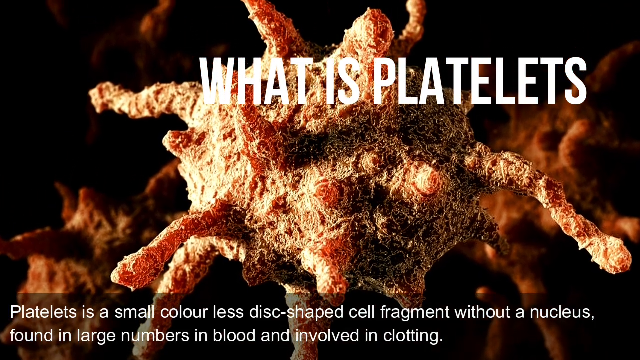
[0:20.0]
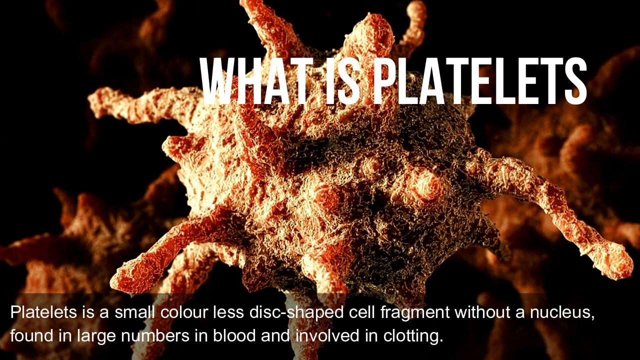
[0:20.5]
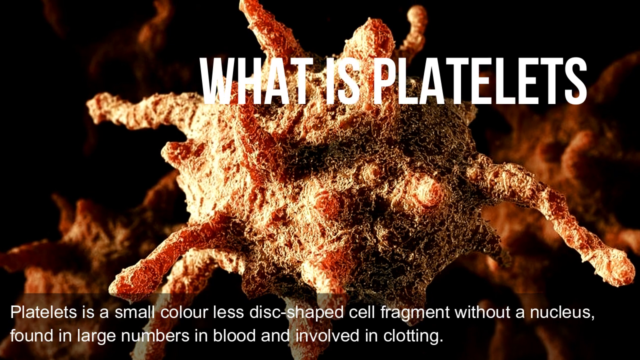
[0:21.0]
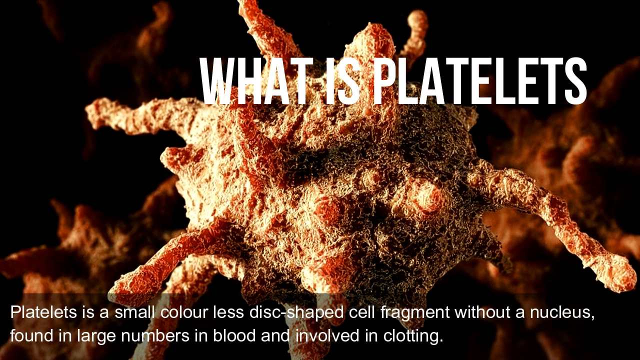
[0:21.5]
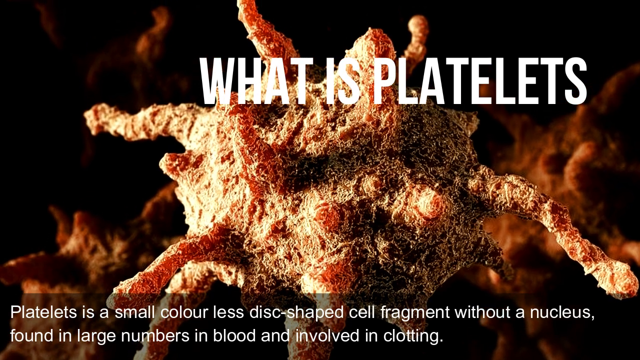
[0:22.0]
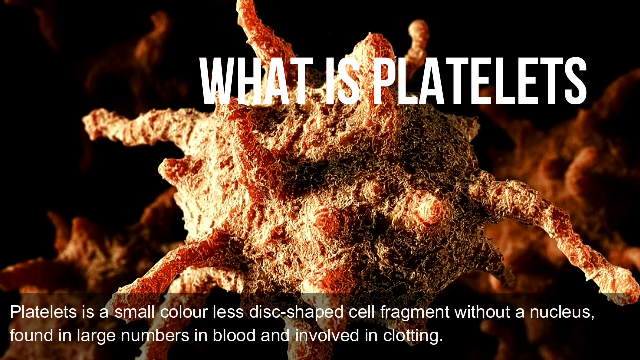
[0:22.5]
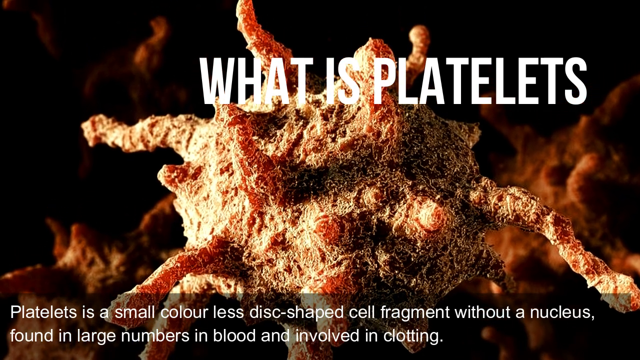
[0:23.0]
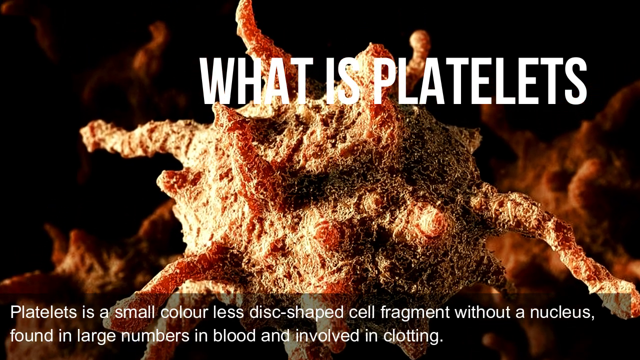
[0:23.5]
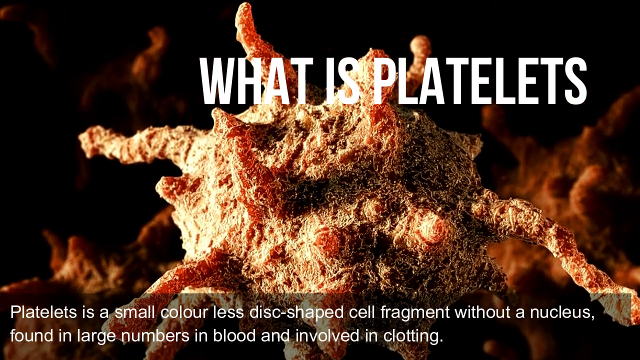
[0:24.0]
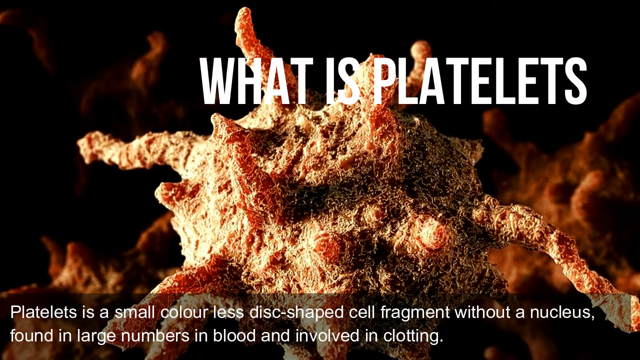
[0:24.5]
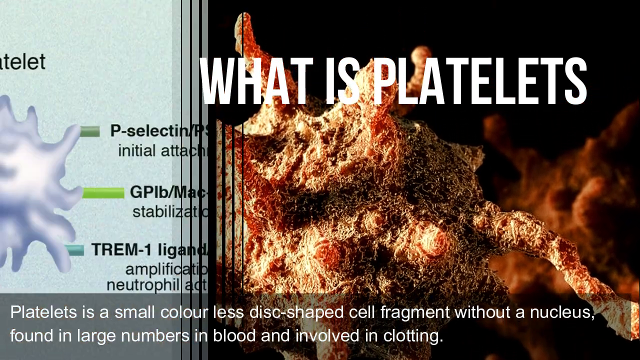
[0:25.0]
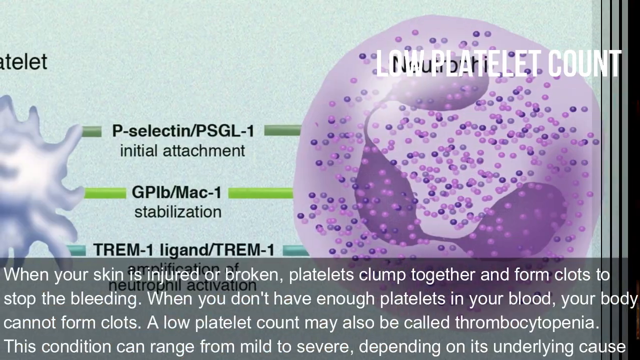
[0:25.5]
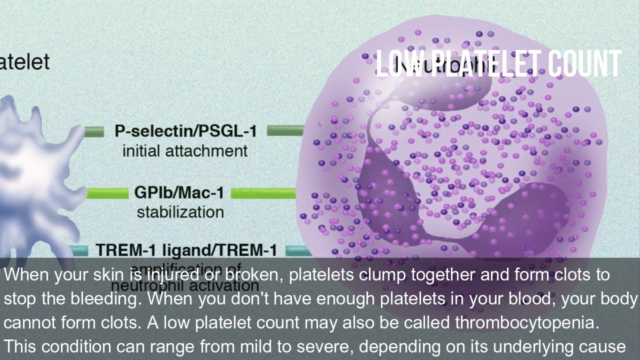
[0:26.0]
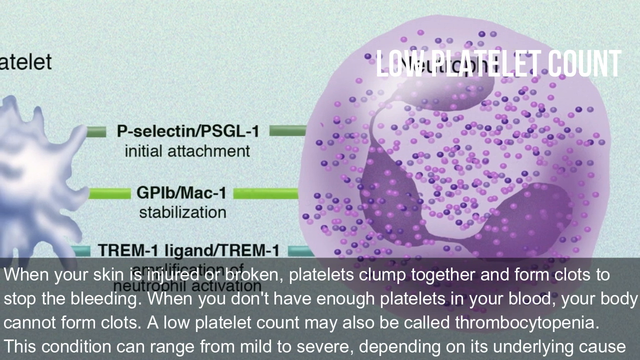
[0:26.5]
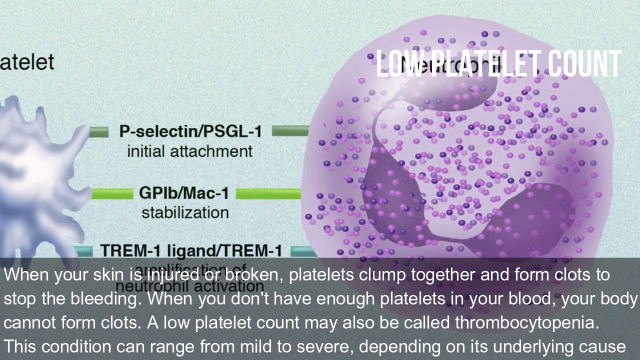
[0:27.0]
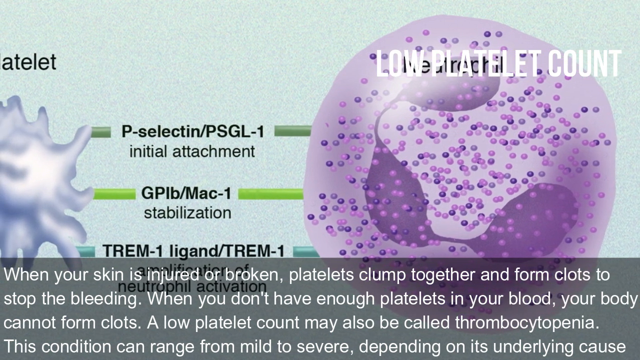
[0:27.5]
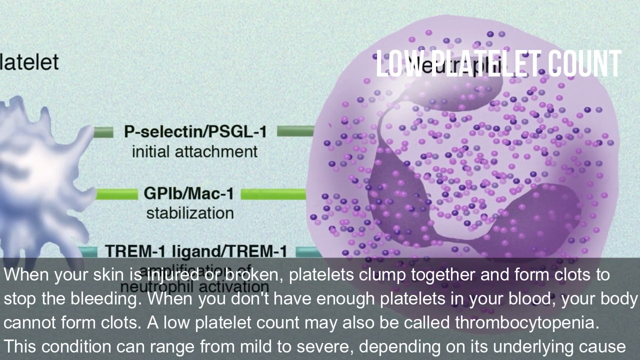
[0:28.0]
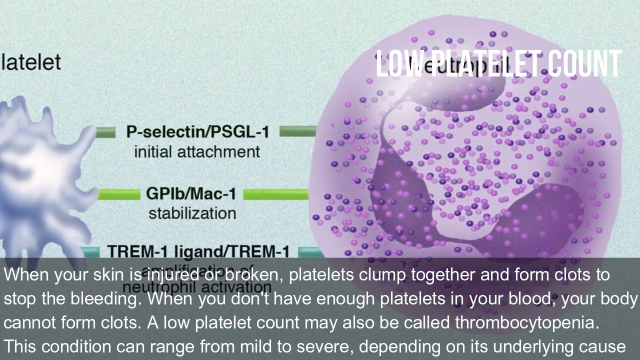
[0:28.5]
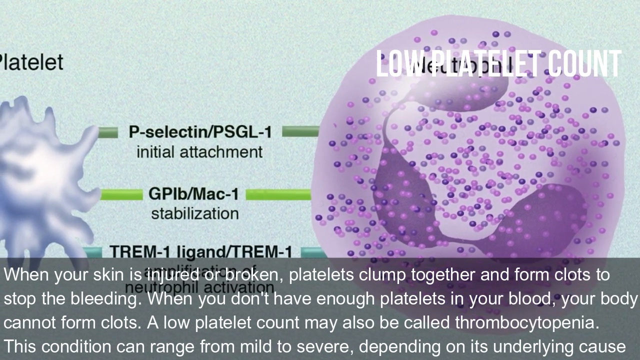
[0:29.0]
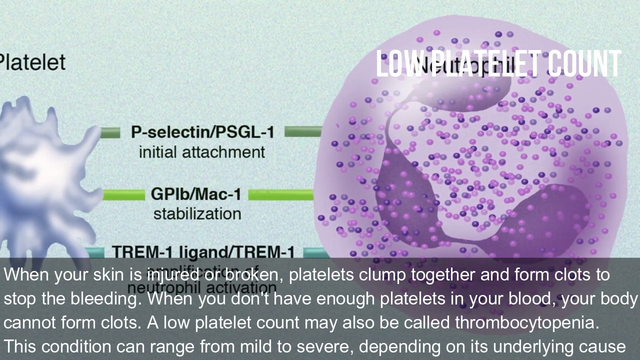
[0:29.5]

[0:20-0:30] The words "what is platelets?" appear with the text "Platelets is a small colorless disc-shaped cell fragment without a nucleus found in large numbers in blood and involved in clotting." A microscopic illustration of a platelet is shown against a black background. The page transitions, and the words at the bottom of the screen read: "when your skin is injured or broken, platelets clump together and form clots to stop the bleeding. When you don't have enough platelets in your blood, your body cannot form clots. A low platelet count may also be called thrombocytopenia. This condition can range from mild to severe, depending on its underlying cause."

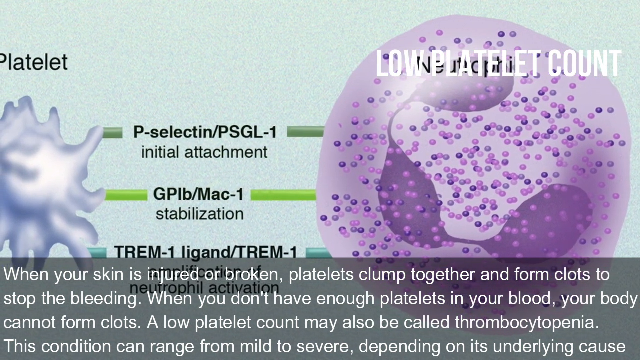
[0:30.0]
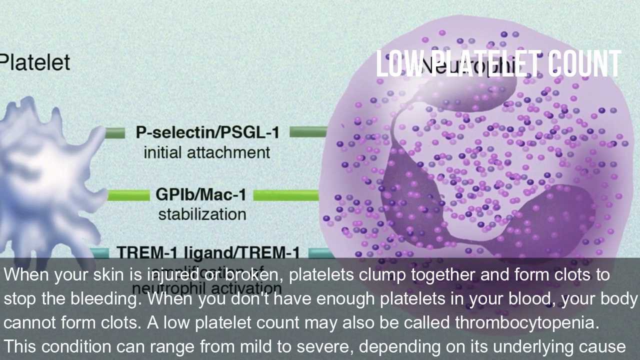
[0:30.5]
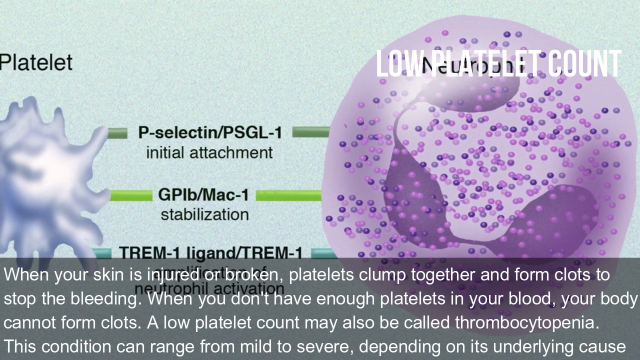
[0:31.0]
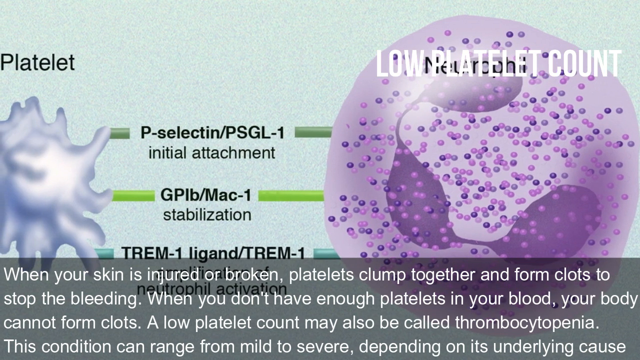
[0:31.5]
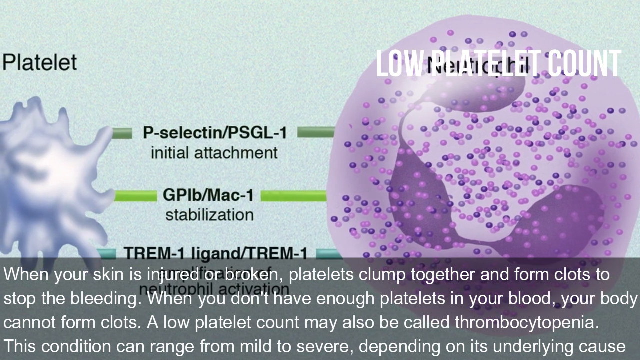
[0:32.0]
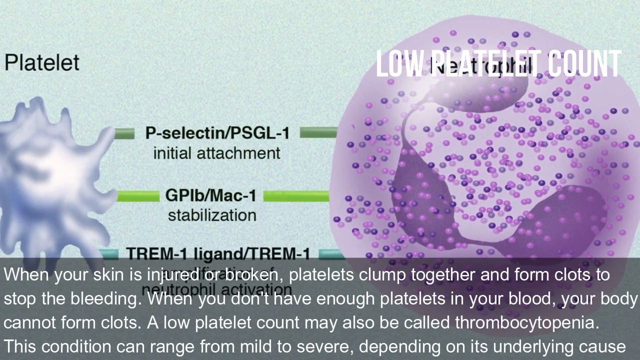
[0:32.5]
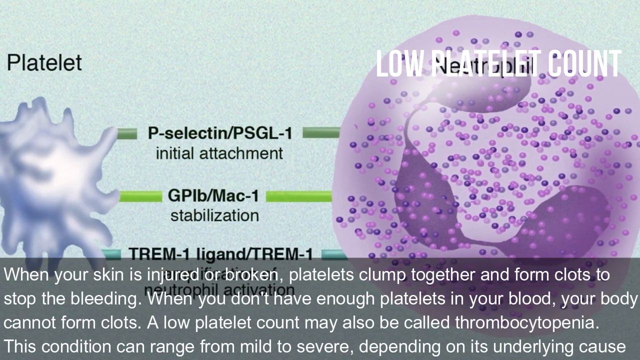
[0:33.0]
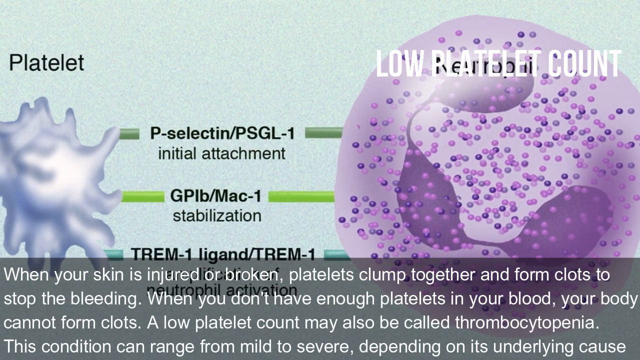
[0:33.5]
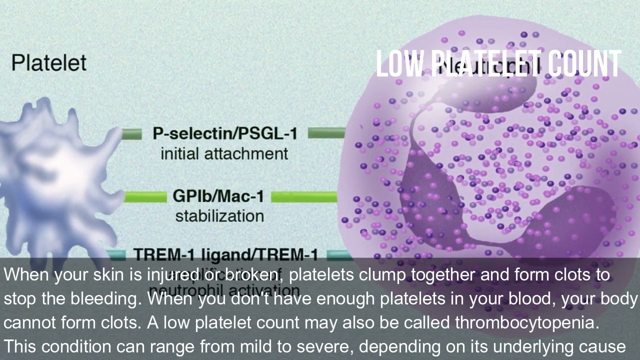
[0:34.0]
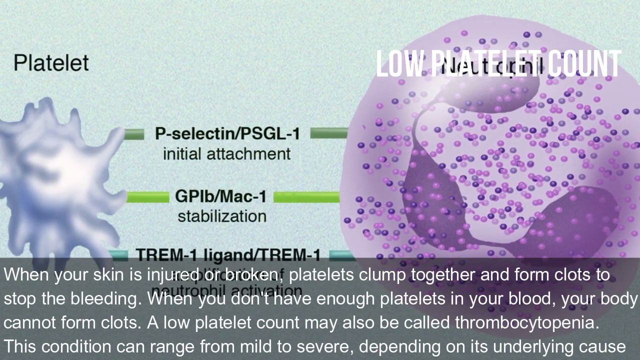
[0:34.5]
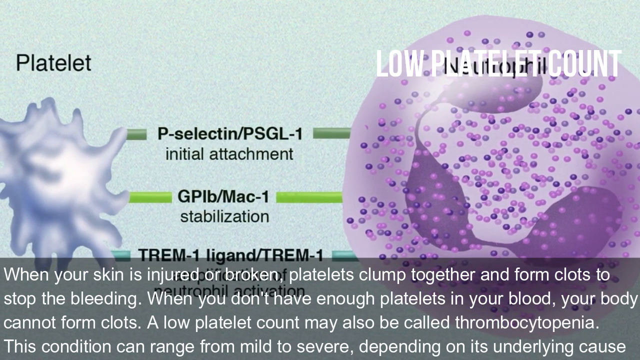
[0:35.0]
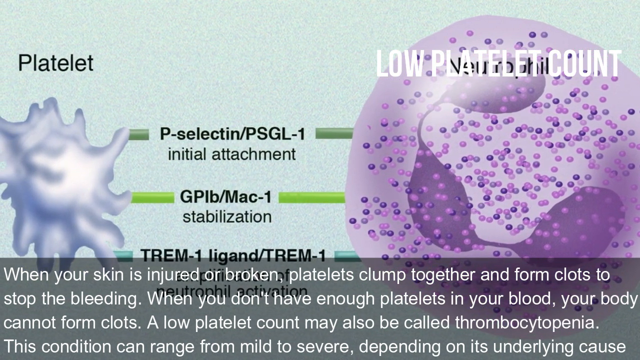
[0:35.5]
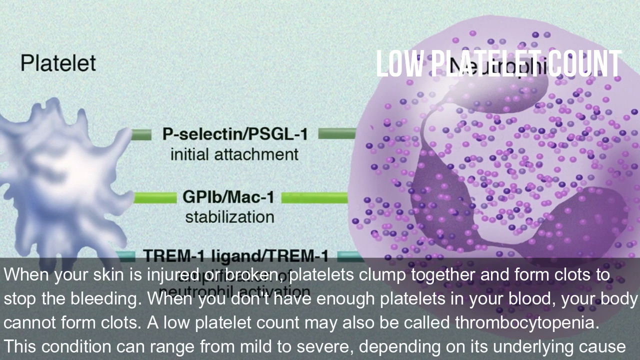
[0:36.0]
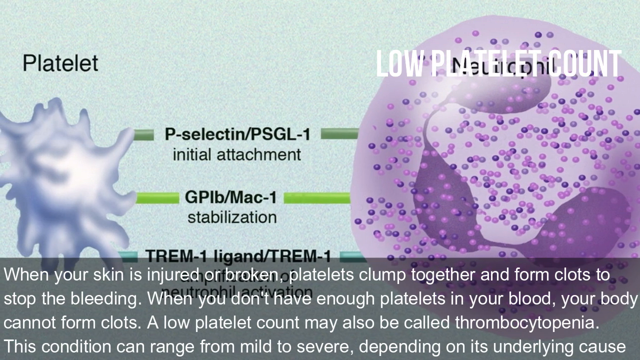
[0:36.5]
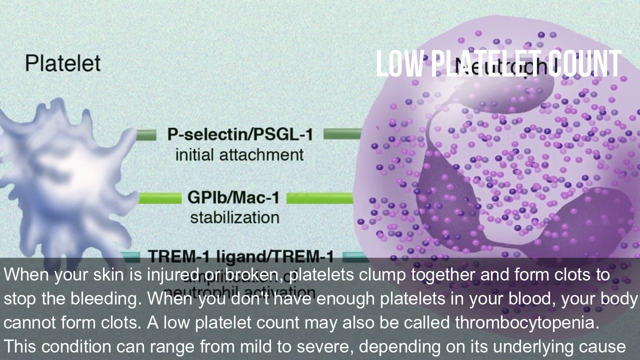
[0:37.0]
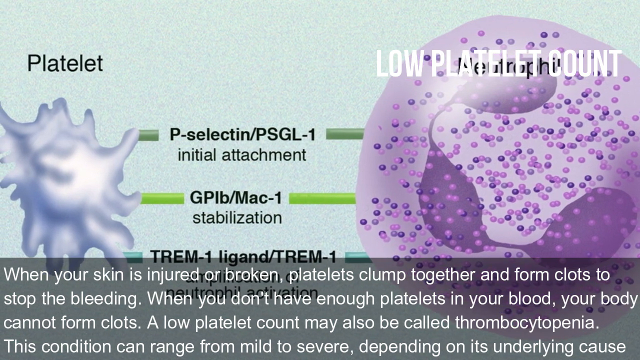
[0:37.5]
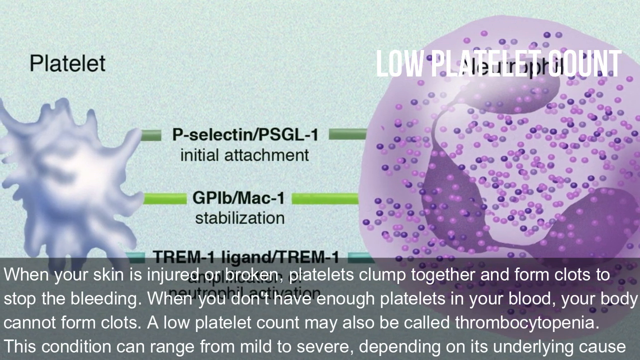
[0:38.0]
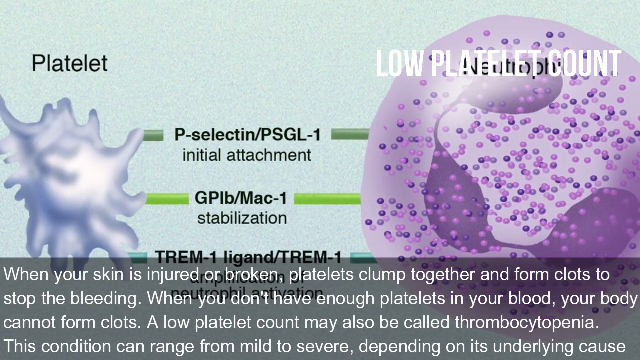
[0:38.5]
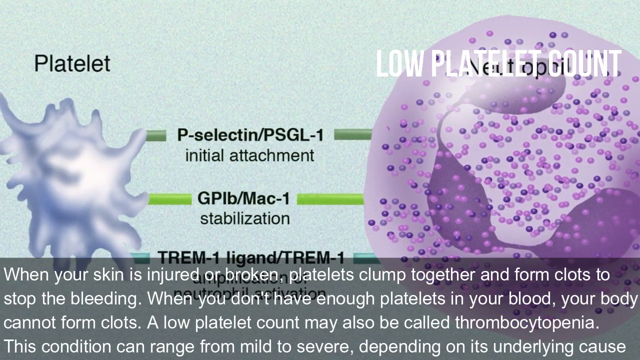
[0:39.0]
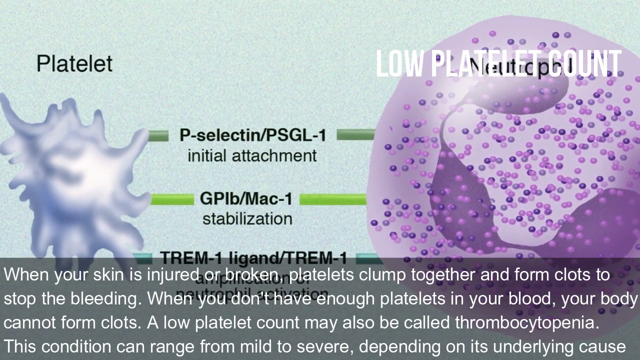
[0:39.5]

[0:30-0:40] The words "normal platelet count" appear in the upper right part of the screen, along with the text "when your skin is injured or broken, platelets clump together and form clots to stop the bleeding. When you don't have enough platelets in your blood, your body cannot form clots. A low platelet count may also be called thrombocytopenia. This condition can range from moderate to severe depending on its underlying cause." Then the words "low platelet count" appear in the upper right corner of the screen in white, all-capital letters. The background of this illustration is a light grayish blue.